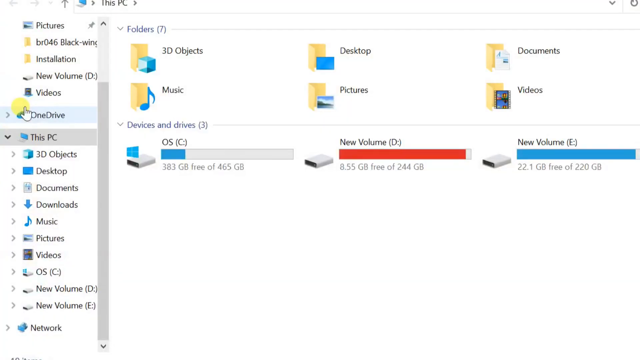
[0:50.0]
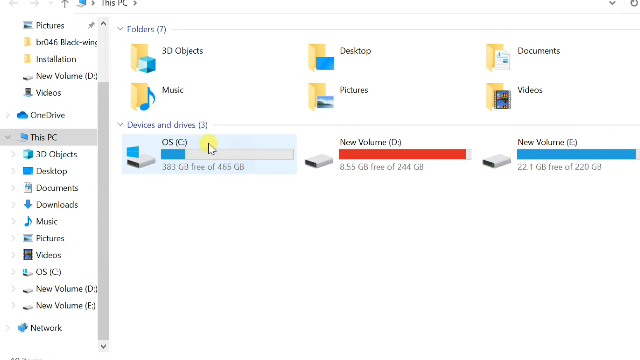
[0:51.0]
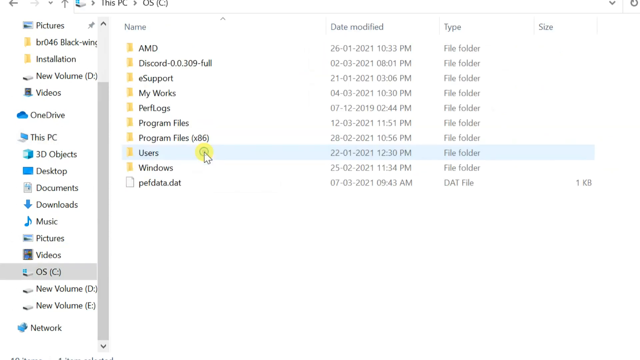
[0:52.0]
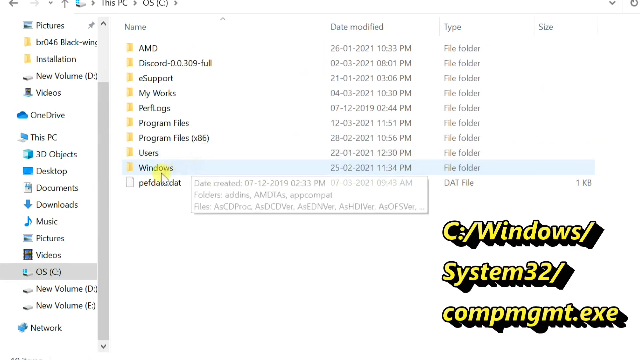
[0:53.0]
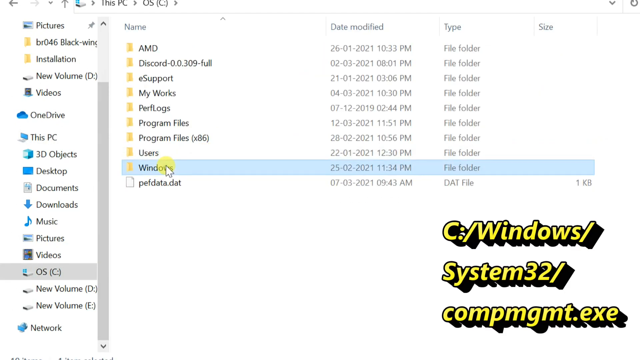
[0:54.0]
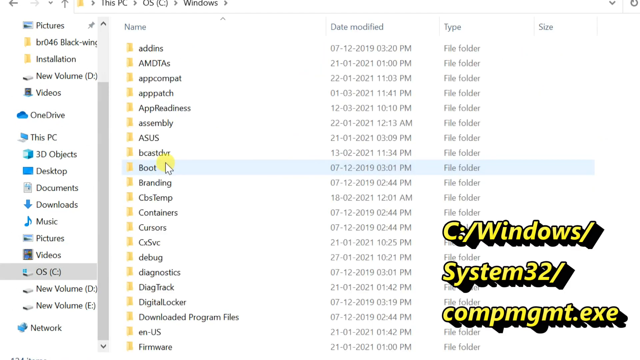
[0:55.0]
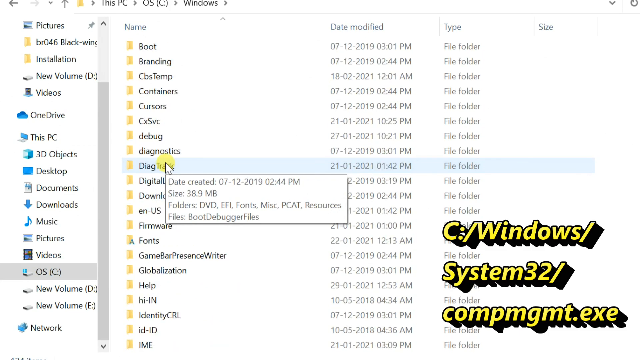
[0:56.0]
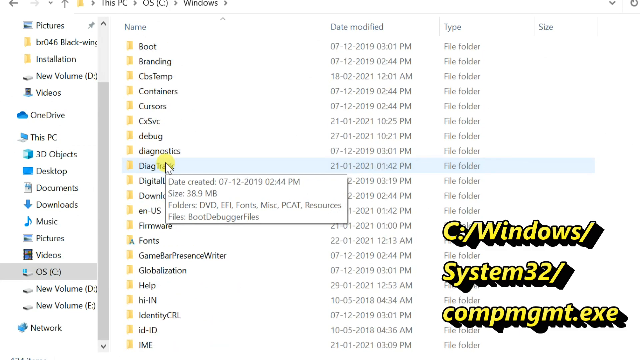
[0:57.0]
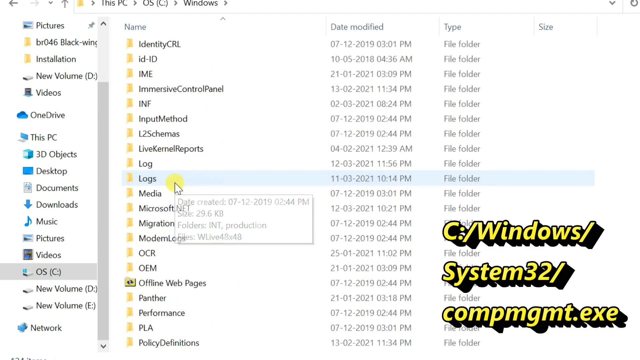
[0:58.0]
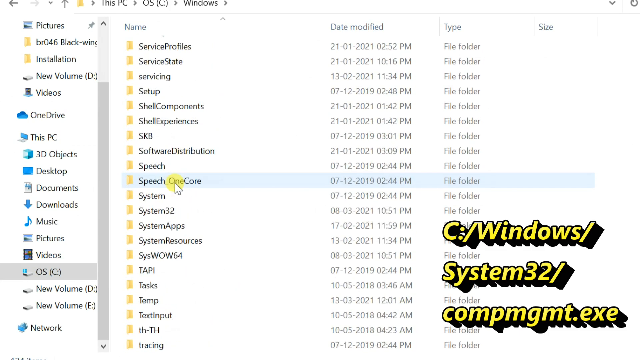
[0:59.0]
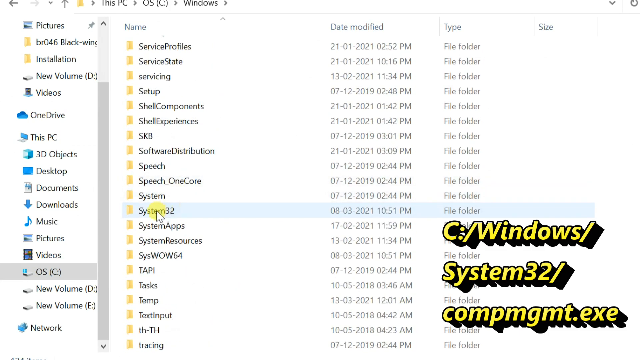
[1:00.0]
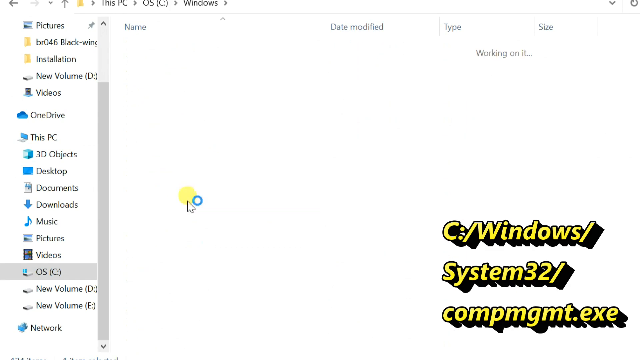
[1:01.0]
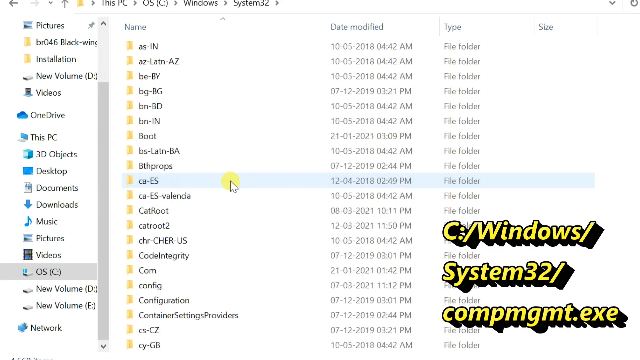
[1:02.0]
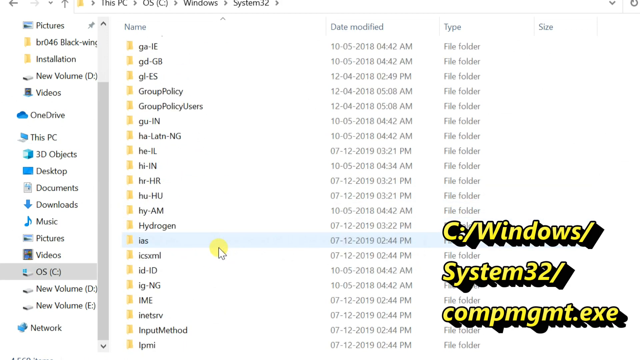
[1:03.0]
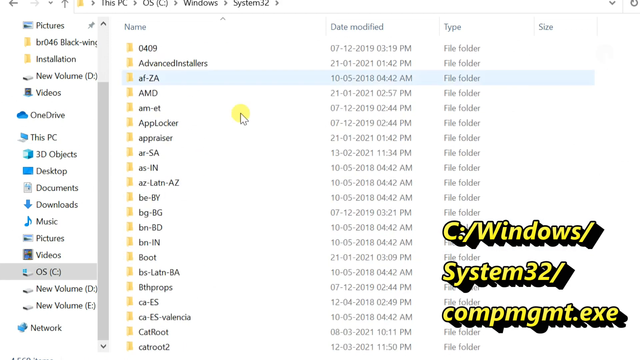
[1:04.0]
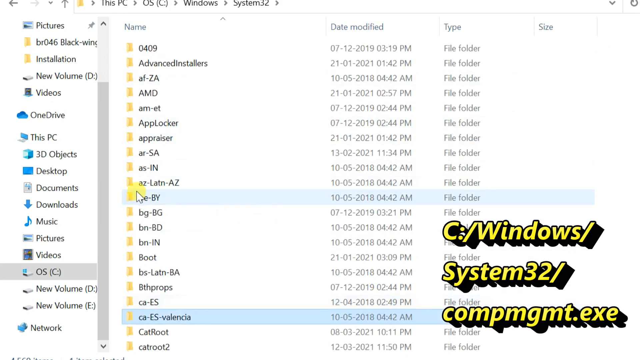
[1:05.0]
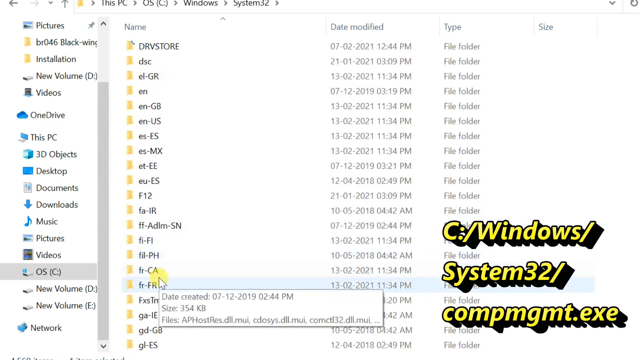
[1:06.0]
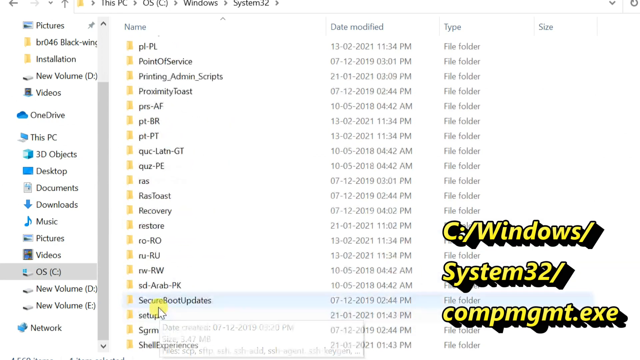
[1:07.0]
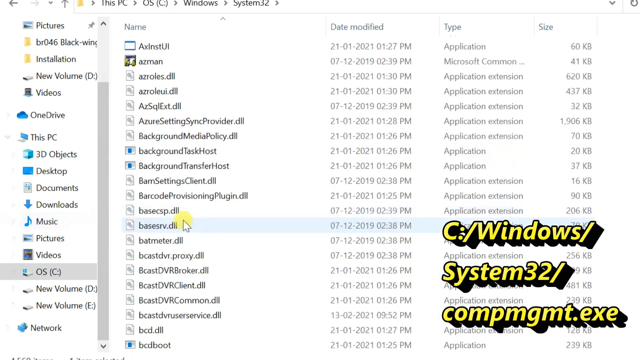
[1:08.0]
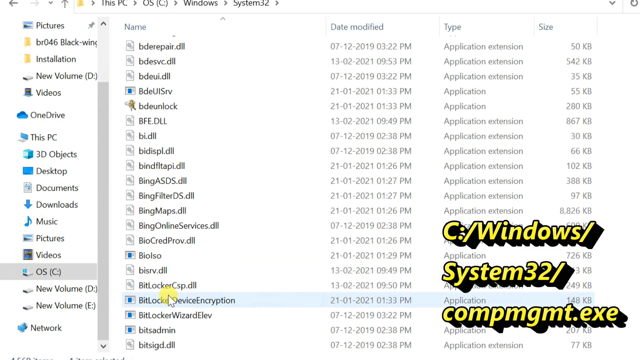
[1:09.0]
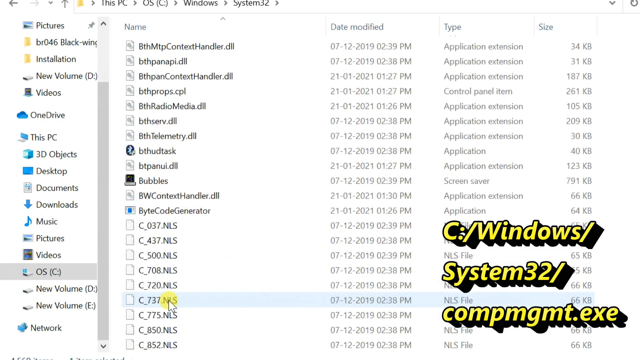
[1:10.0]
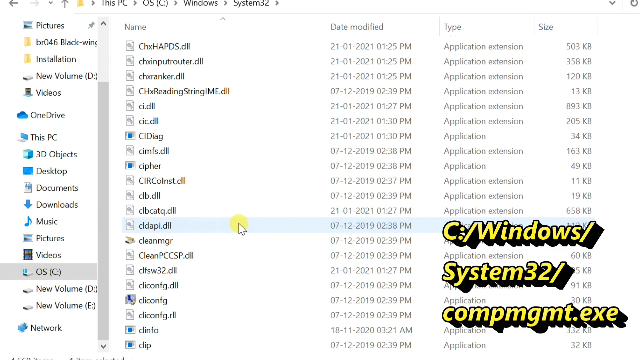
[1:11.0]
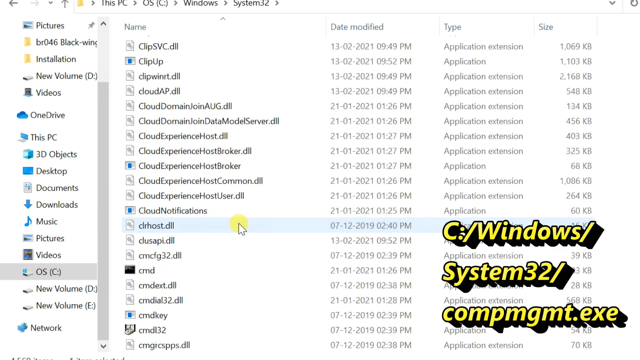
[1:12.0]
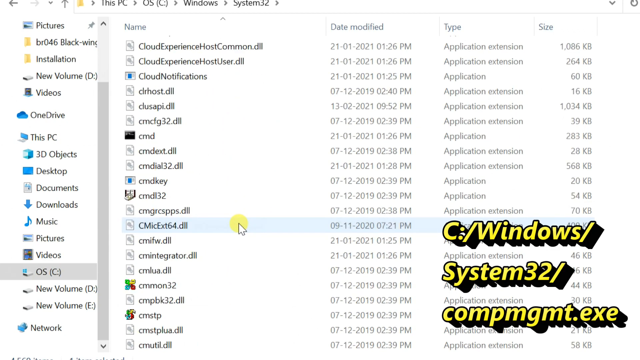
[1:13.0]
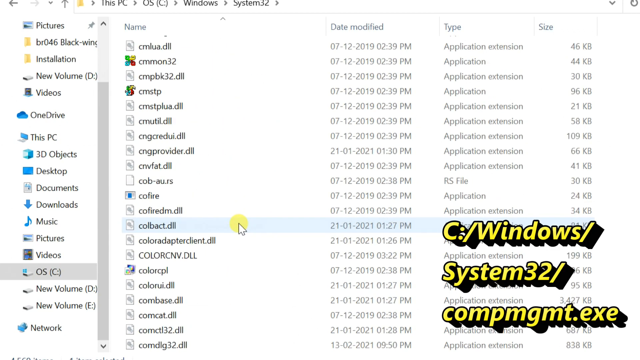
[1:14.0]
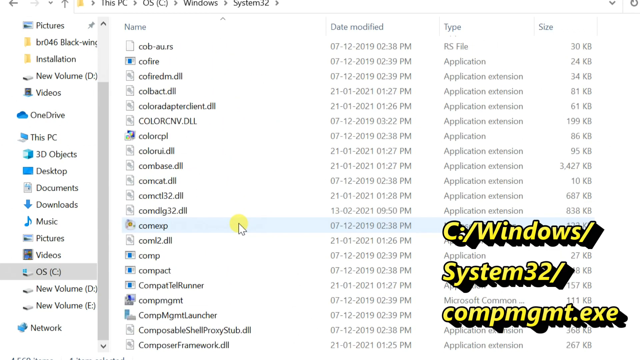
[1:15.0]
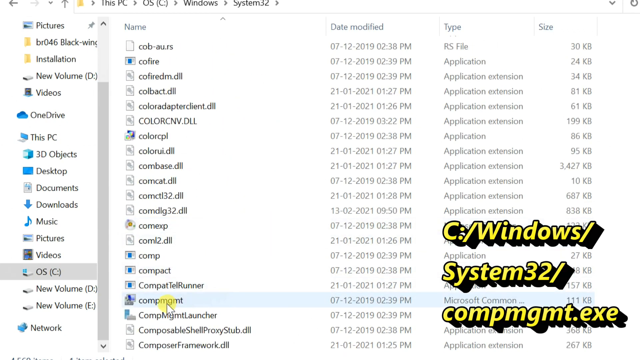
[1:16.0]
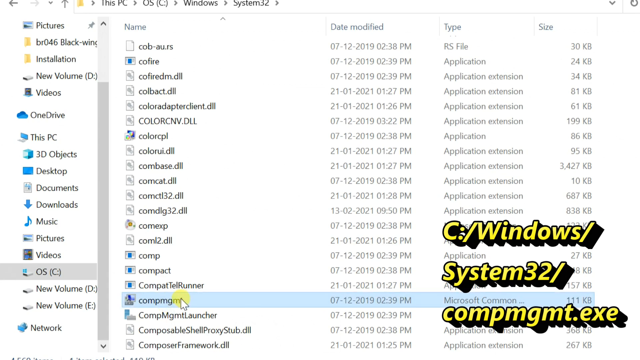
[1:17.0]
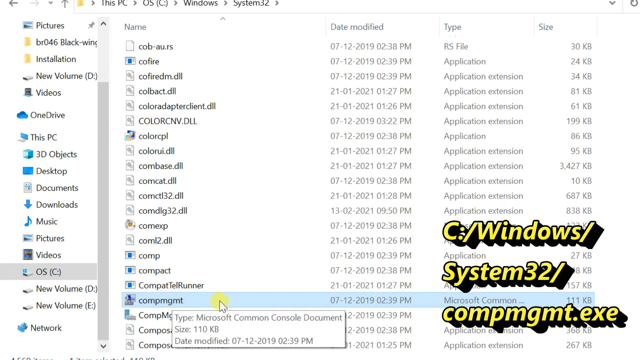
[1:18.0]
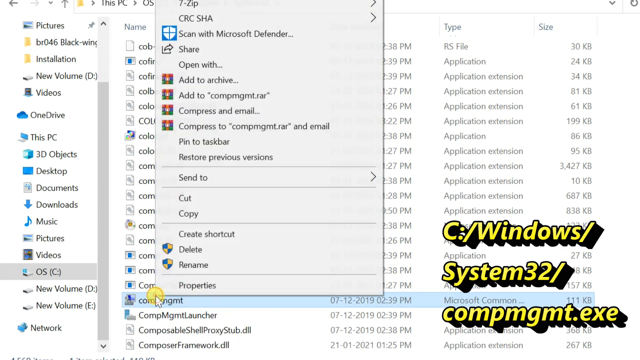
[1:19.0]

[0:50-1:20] The user hovers over a different item, one that says "system 32," as if going into a hard drive. They scroll down through a large number of files related to the computer, apparently over a hundred items that could be clicked. They do not really click on anything until they finally click on the word component. Text in the corner refers to "windows system 32." It seems to be a screen recording made to help someone find a specific document.